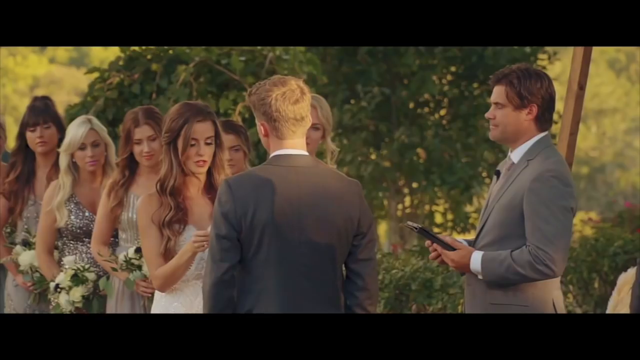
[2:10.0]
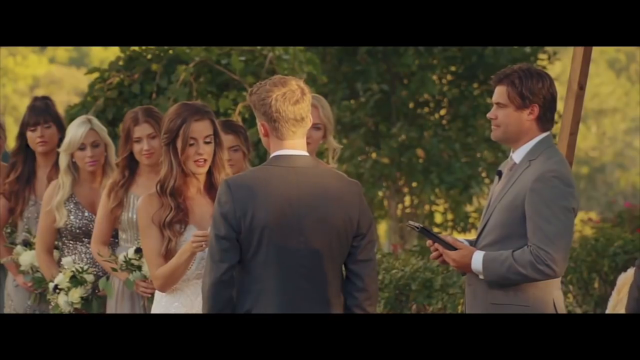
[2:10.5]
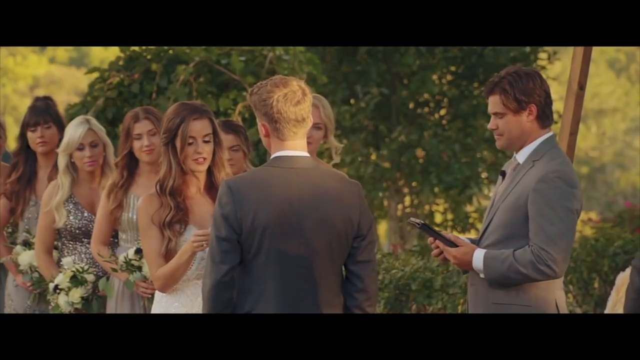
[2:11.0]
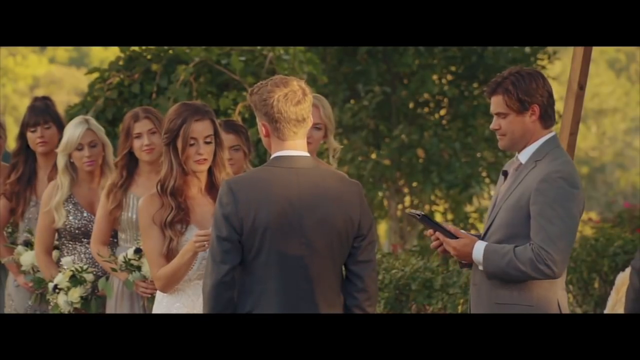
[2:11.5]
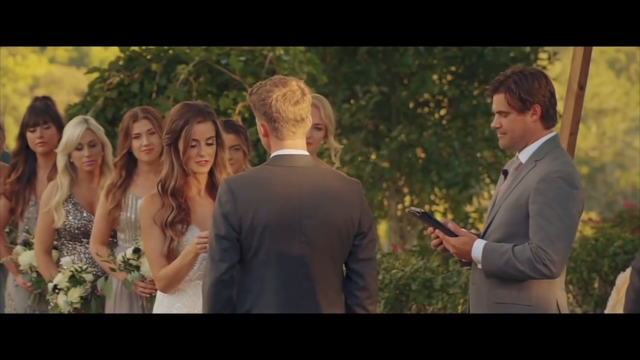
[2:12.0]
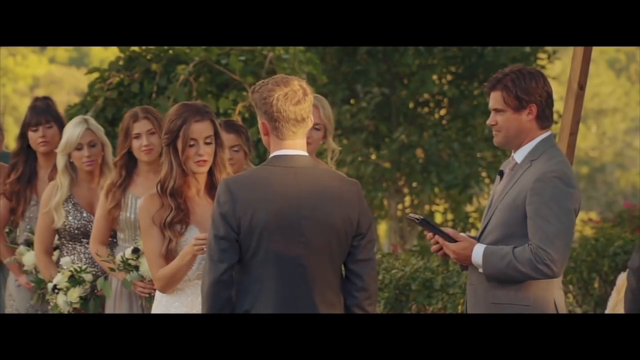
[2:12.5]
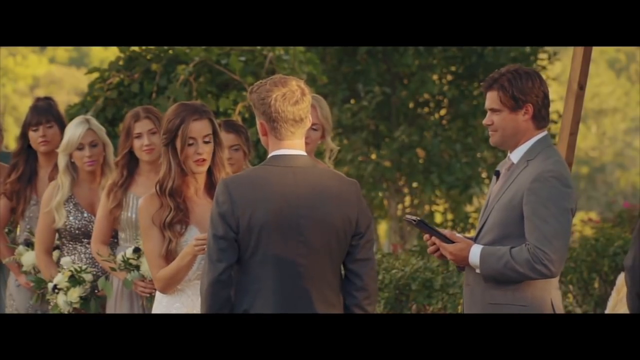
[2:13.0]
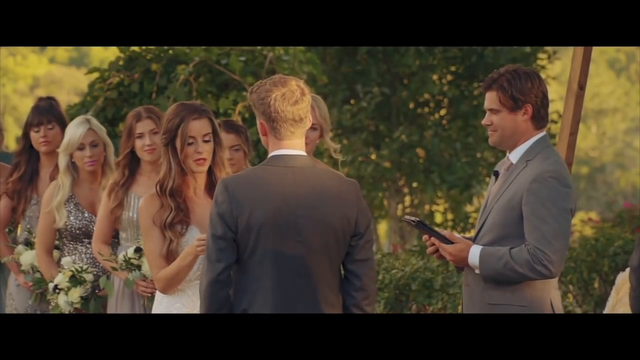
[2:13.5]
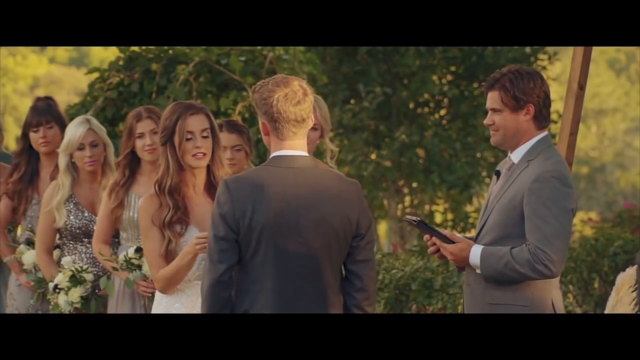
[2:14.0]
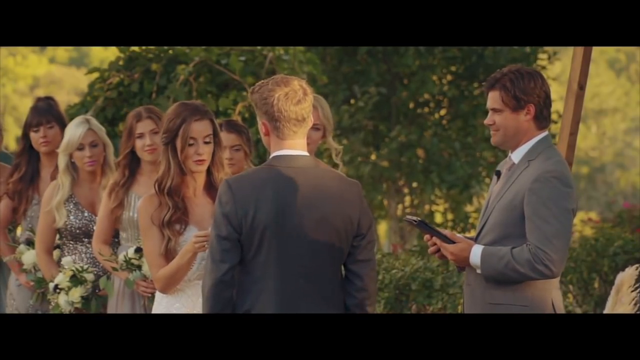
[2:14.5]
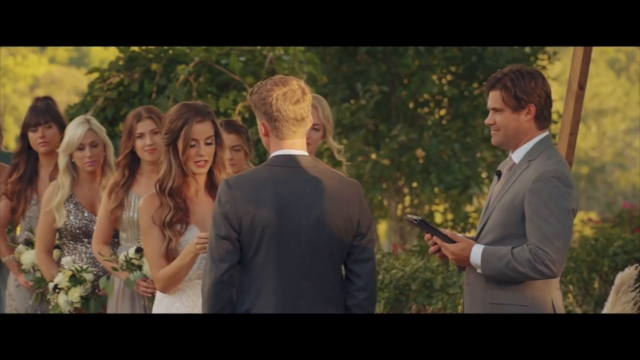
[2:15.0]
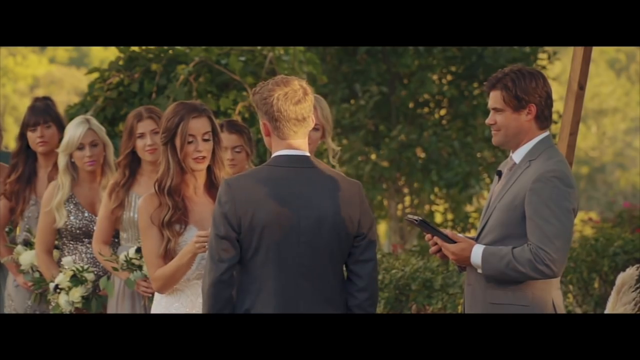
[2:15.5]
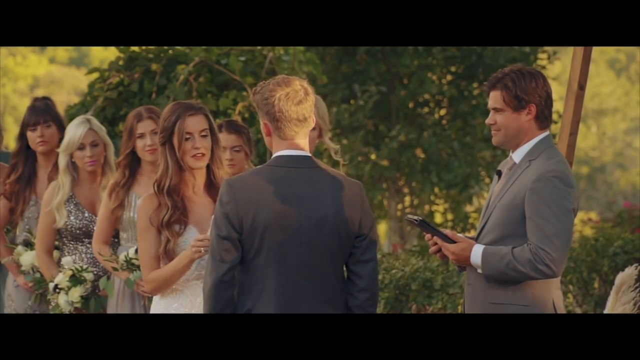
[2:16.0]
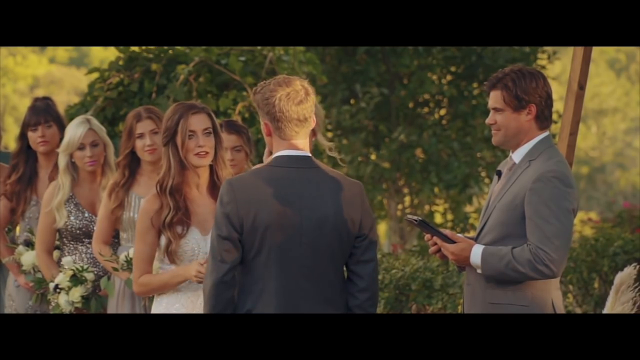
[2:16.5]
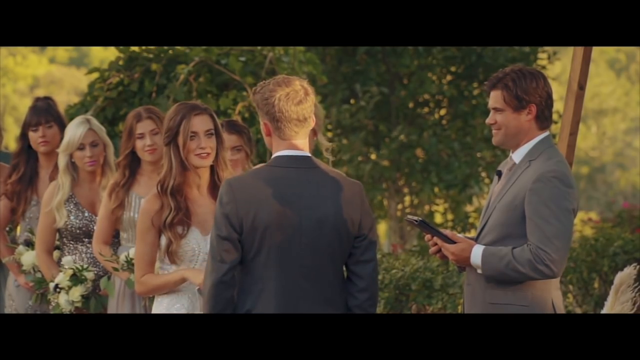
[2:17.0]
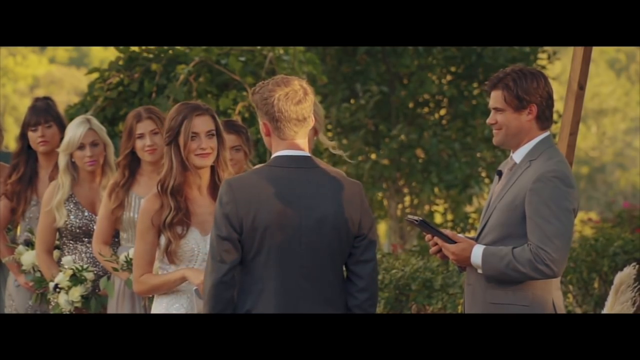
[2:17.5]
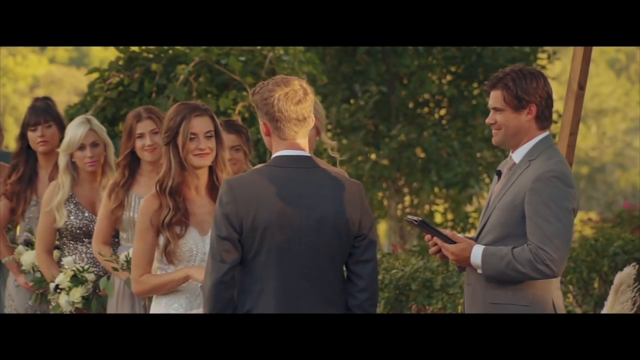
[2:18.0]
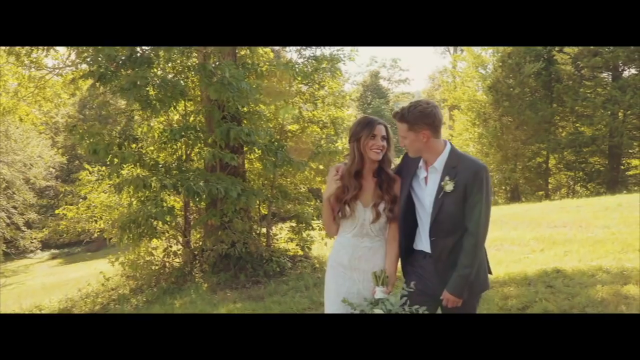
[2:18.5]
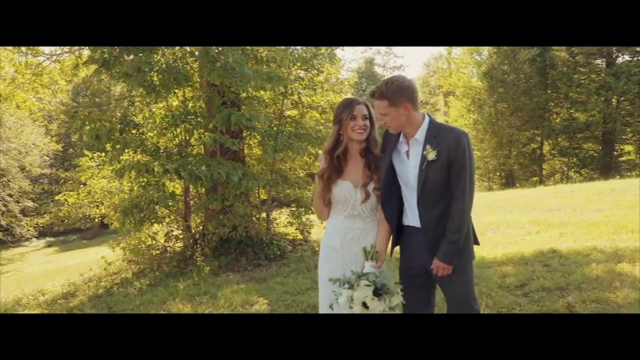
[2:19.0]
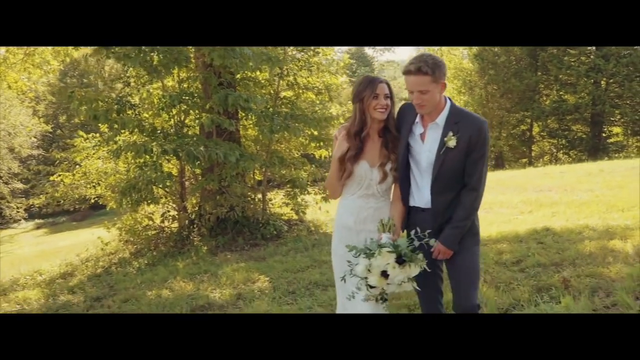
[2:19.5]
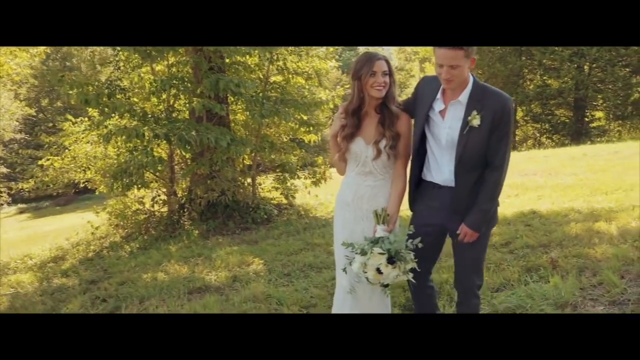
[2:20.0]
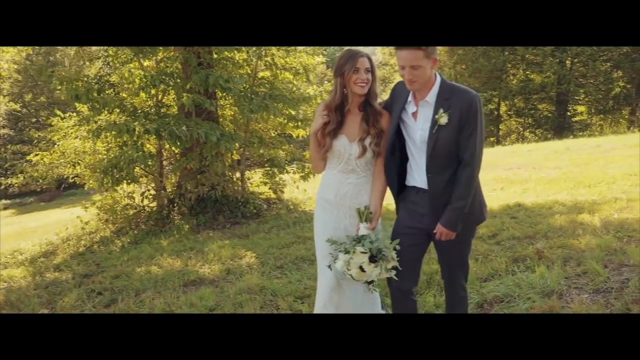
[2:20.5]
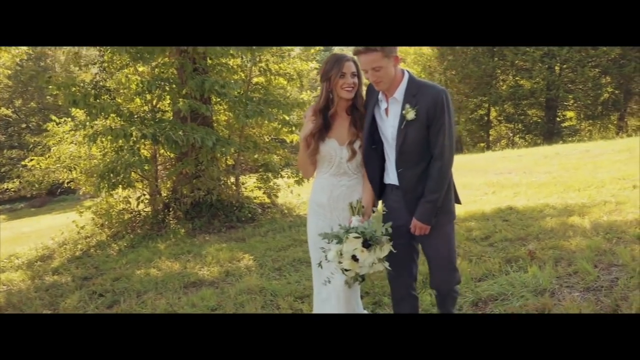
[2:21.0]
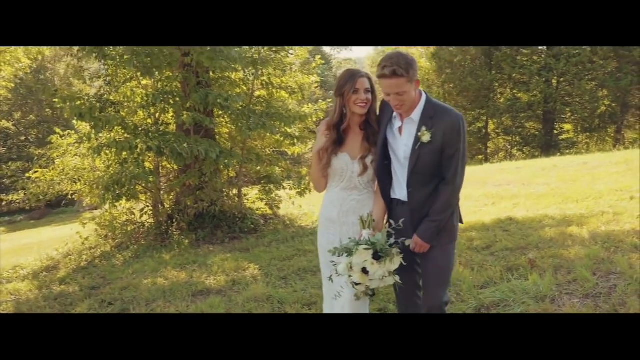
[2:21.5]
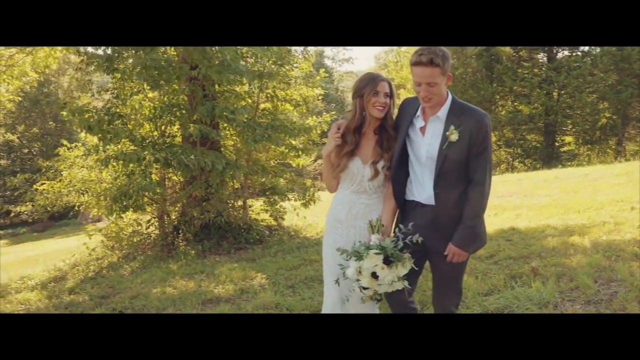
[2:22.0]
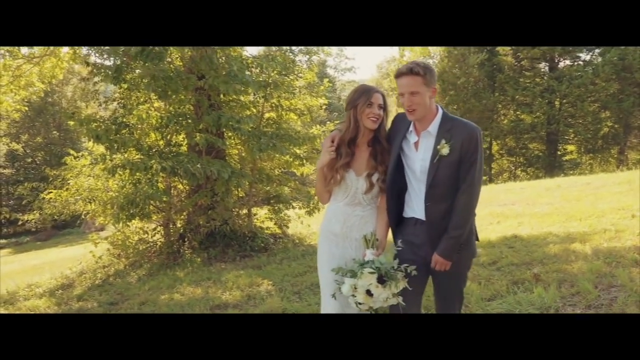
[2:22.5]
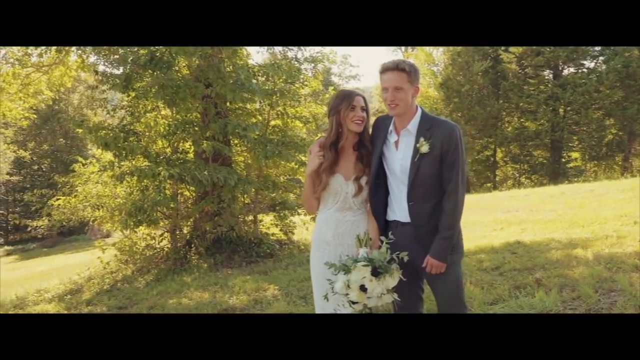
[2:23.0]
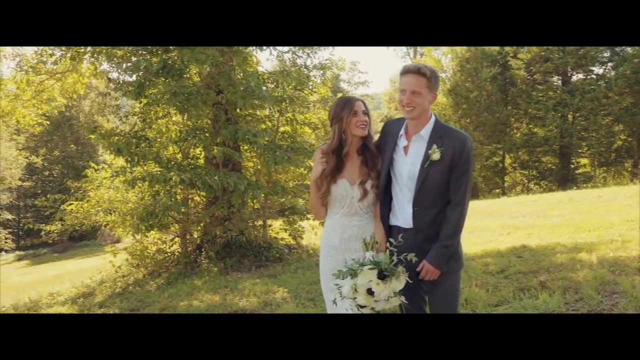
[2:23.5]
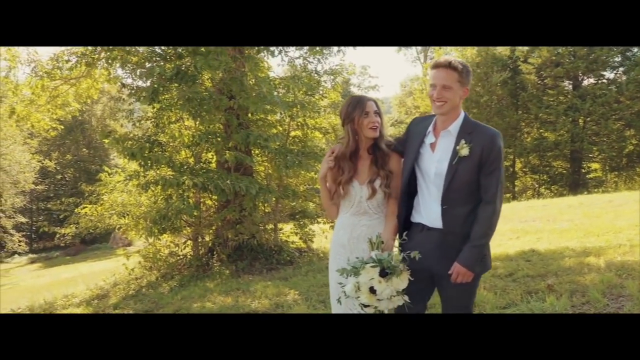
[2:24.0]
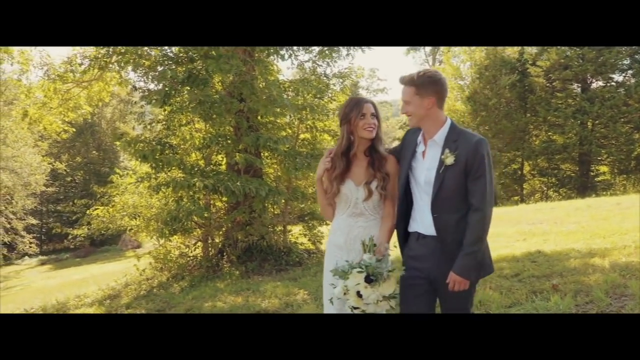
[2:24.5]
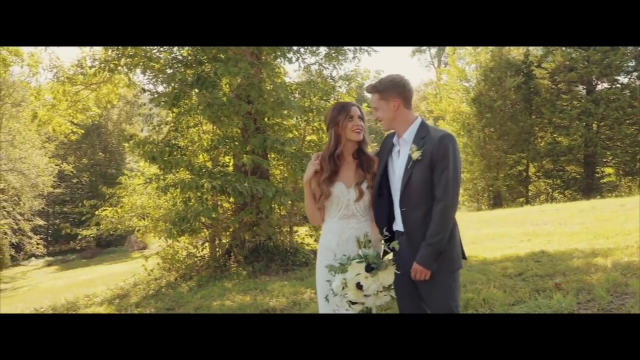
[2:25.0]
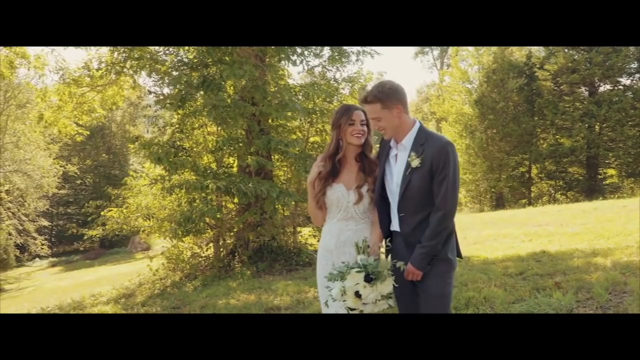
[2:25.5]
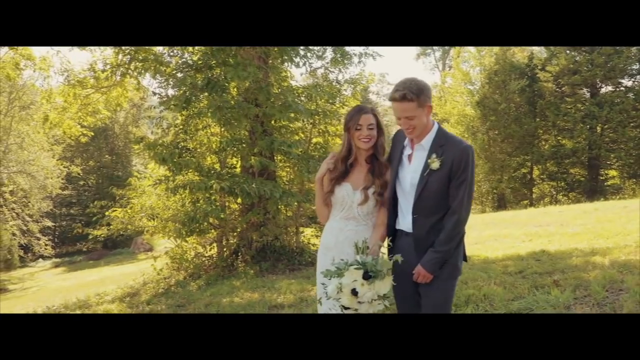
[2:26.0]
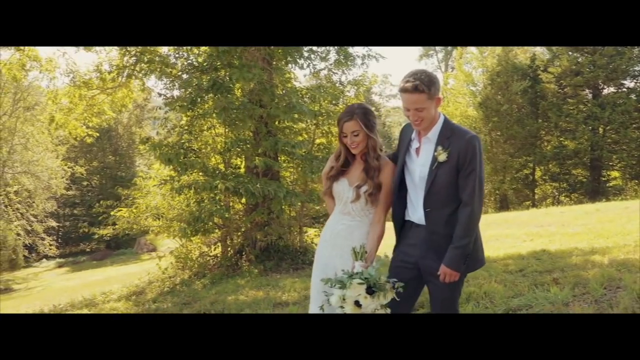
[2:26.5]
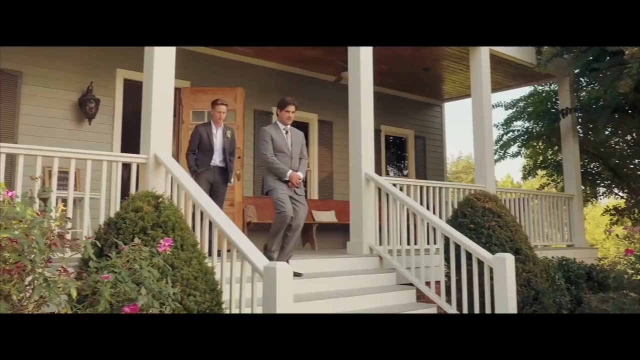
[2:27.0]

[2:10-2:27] Guests are getting seated, and the front row is empty, possibly reserved for close family members or the groomsmen and bridesmaids. The woman continues giving her vows, and the shadow of a man moves across the suits of the groomsmen. The scene cuts to the couple walking in the woods, with a noticeable big tree in the middle of the scene that has large leaves growing around it. In another shot, the groomsmen and a man who looks like the pastor walk out of a building that looks like a house, with the door open. One groomsman has his hands in his pocket, while the man in the grey suit has his arms crossed with his hands on his stomach.